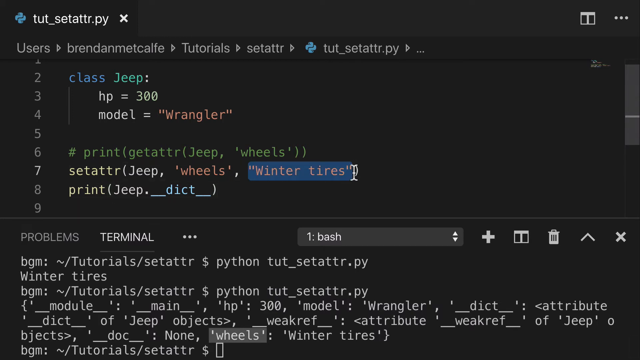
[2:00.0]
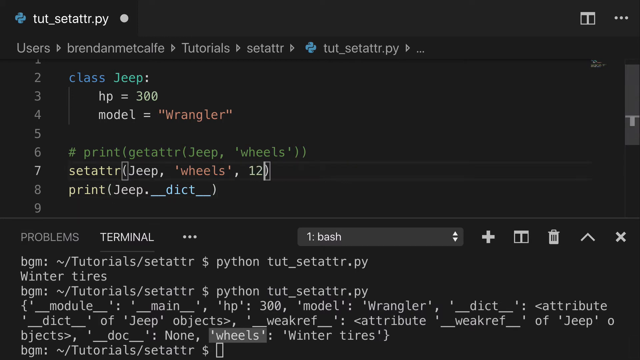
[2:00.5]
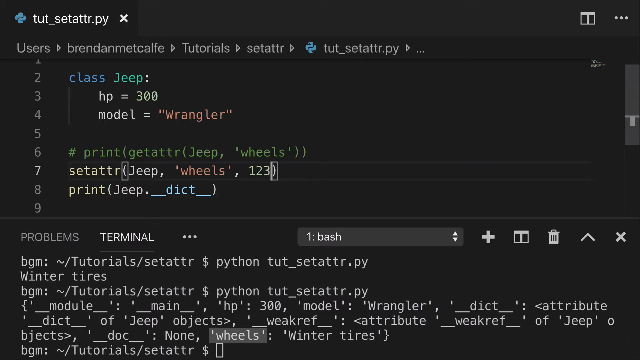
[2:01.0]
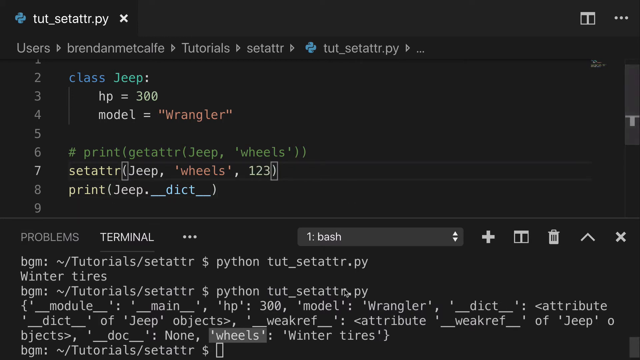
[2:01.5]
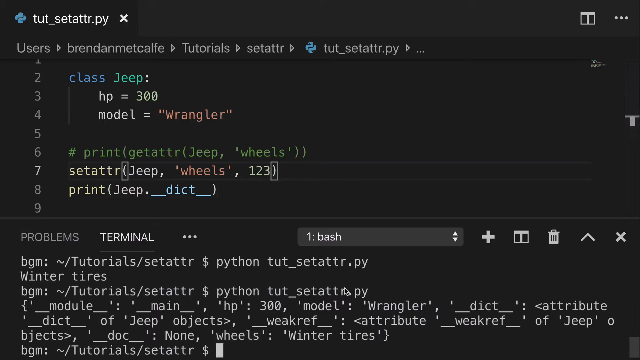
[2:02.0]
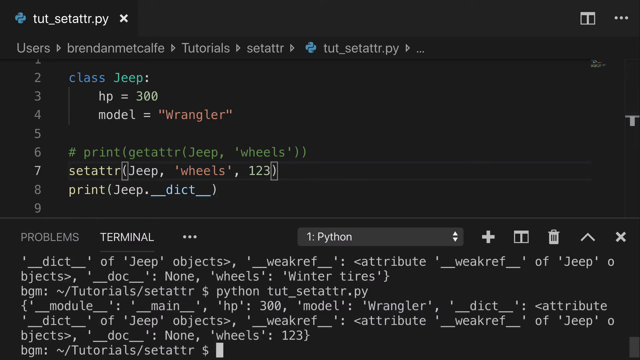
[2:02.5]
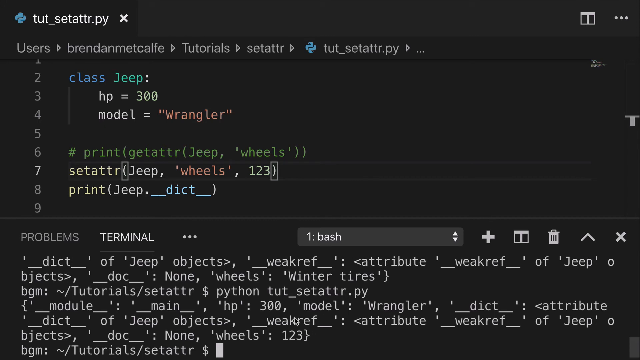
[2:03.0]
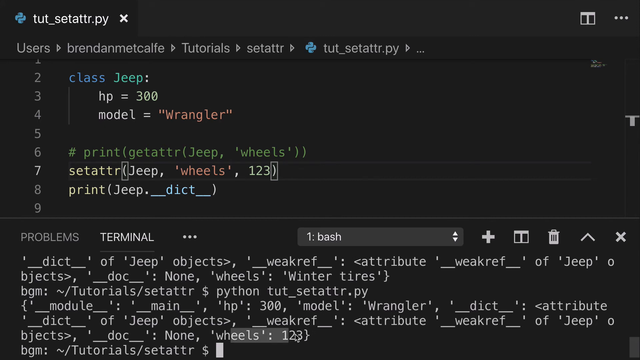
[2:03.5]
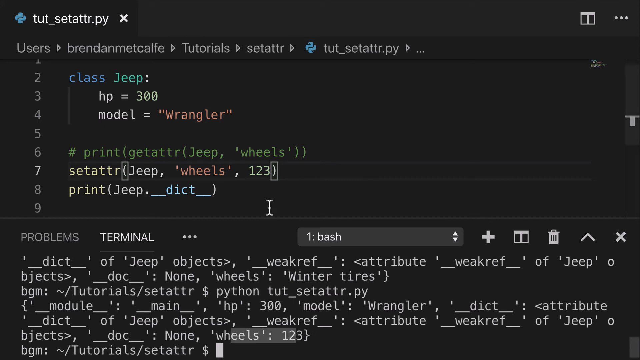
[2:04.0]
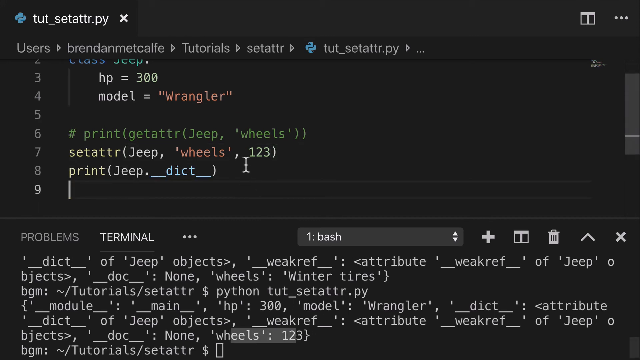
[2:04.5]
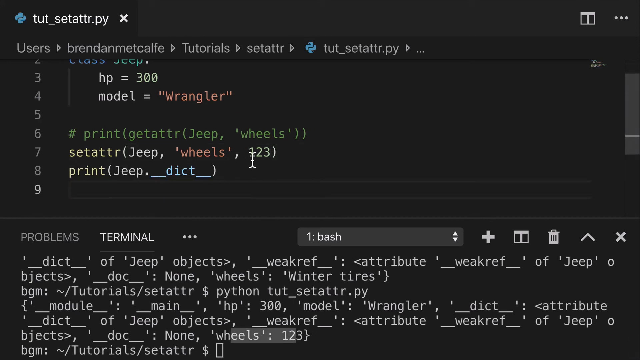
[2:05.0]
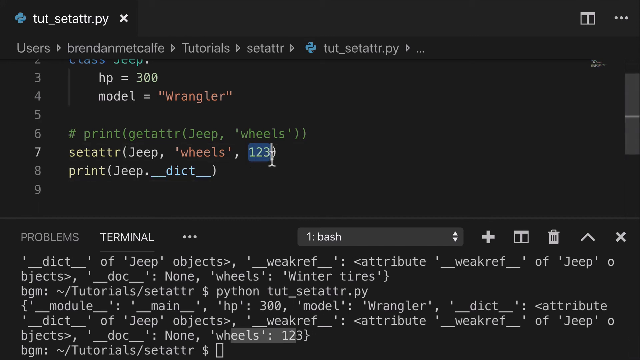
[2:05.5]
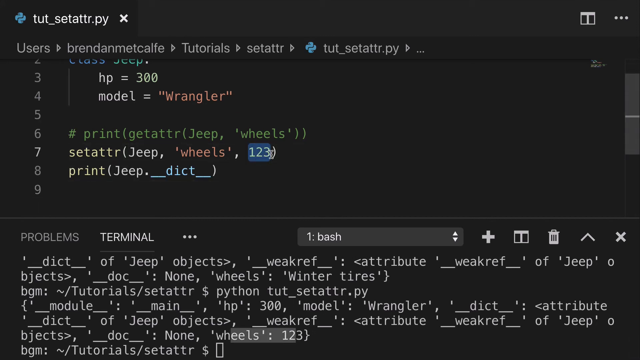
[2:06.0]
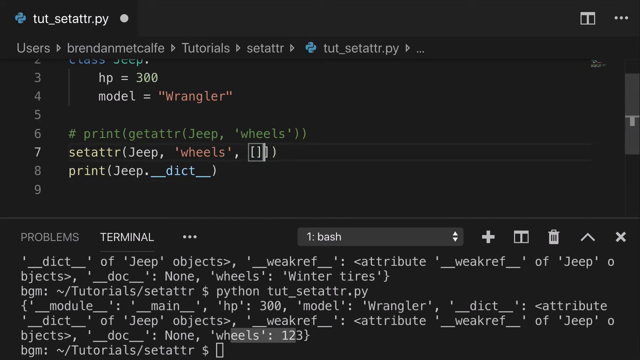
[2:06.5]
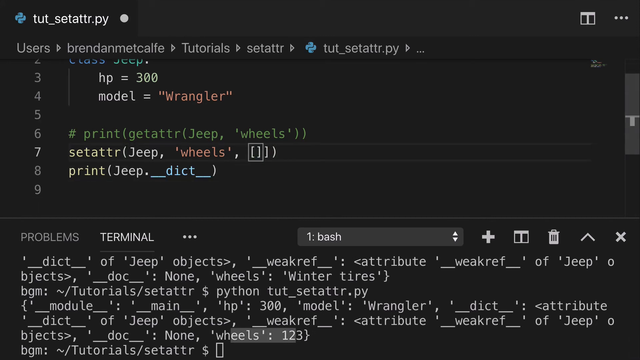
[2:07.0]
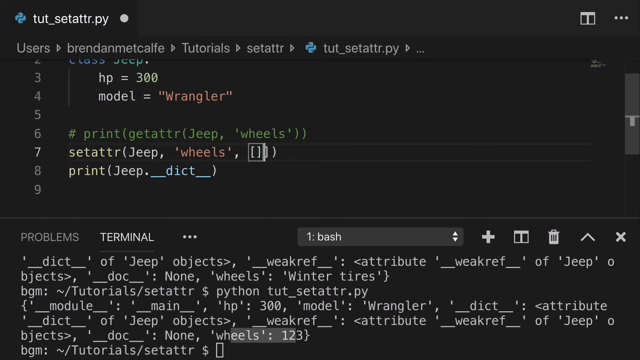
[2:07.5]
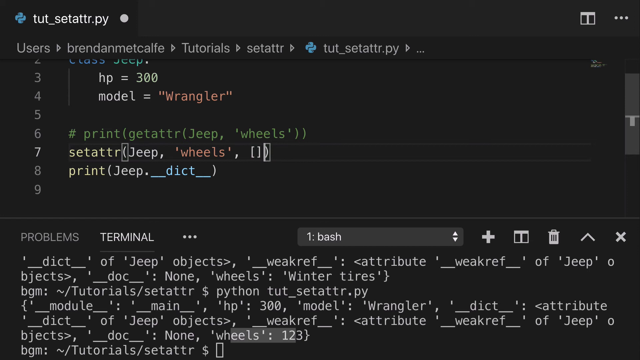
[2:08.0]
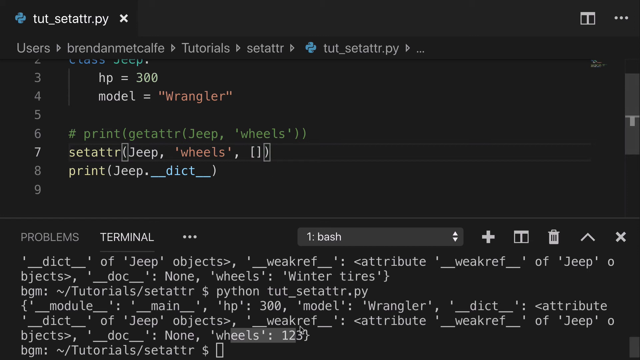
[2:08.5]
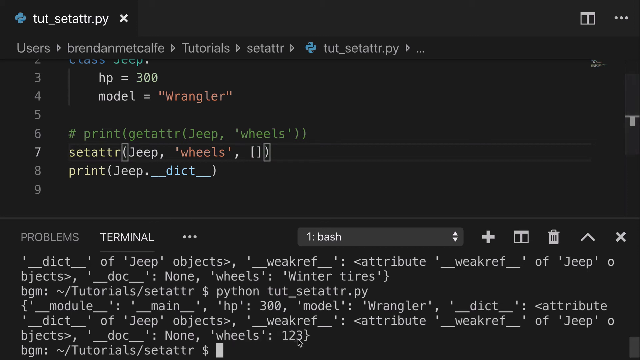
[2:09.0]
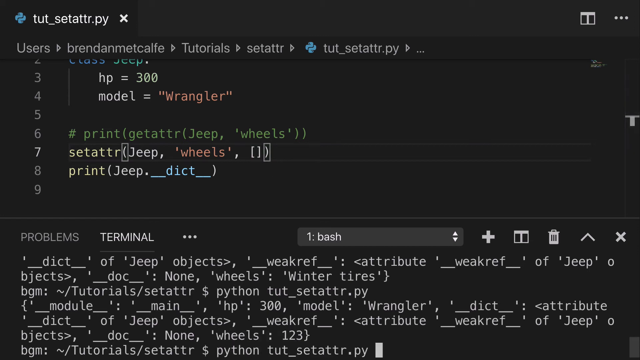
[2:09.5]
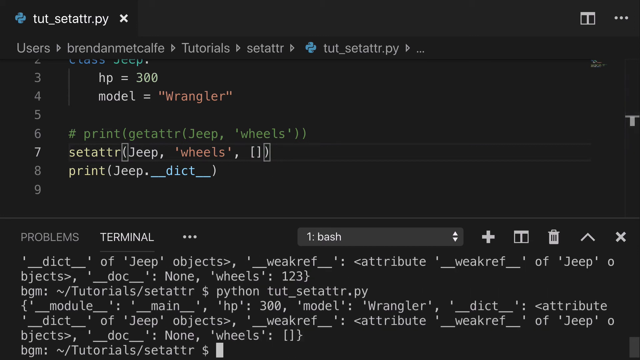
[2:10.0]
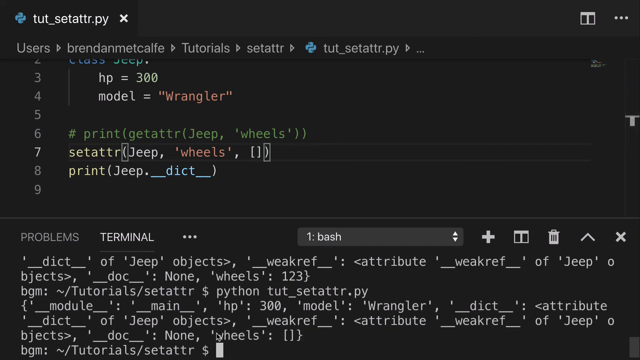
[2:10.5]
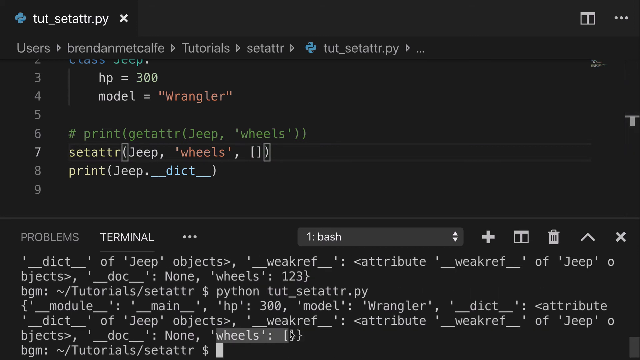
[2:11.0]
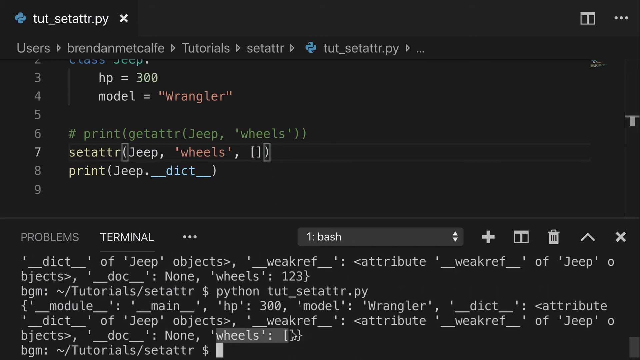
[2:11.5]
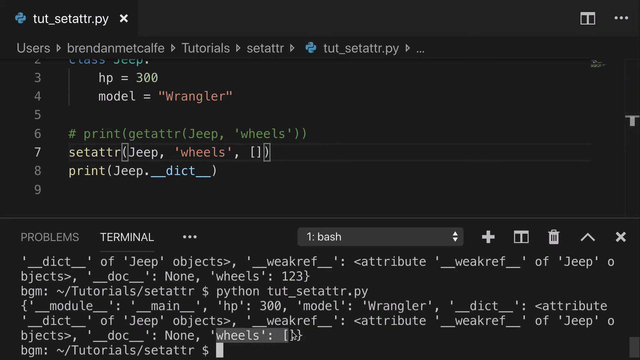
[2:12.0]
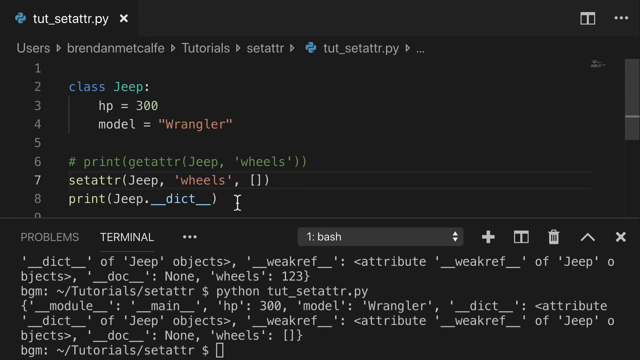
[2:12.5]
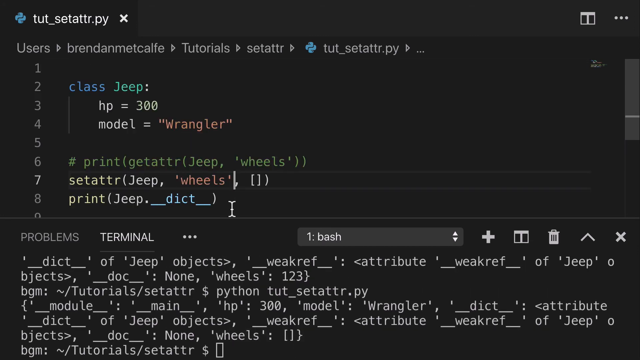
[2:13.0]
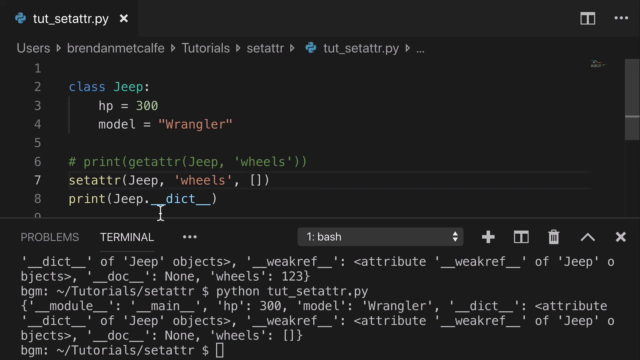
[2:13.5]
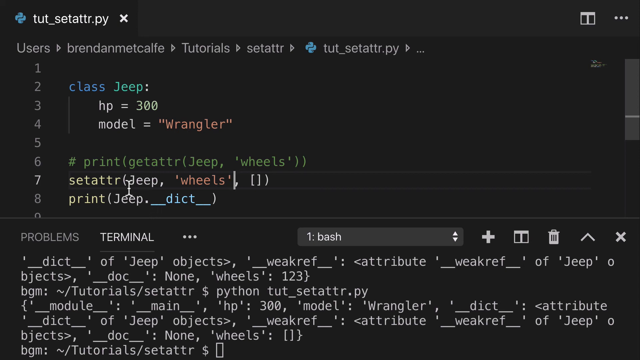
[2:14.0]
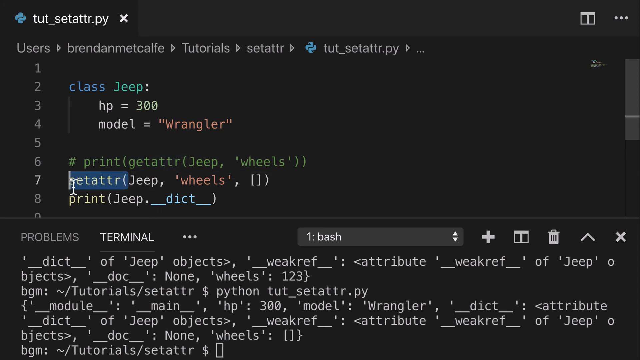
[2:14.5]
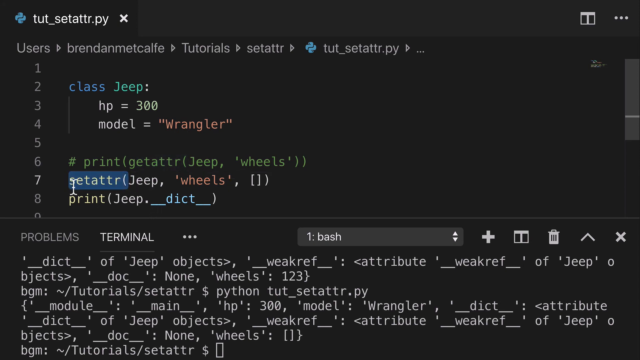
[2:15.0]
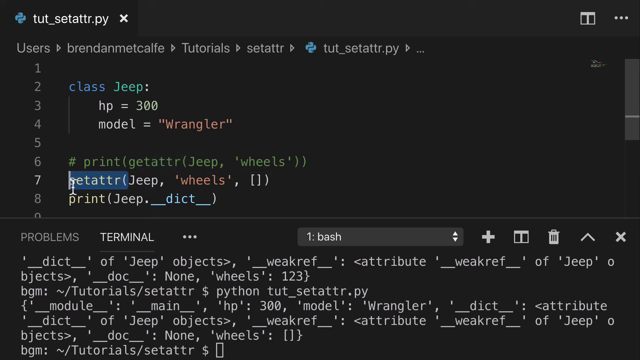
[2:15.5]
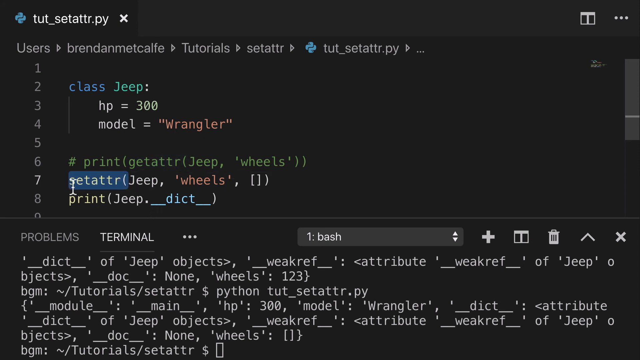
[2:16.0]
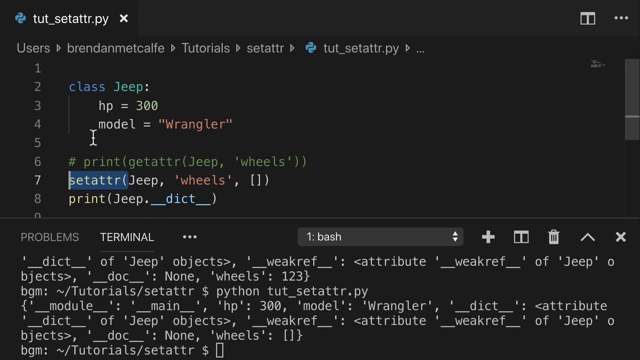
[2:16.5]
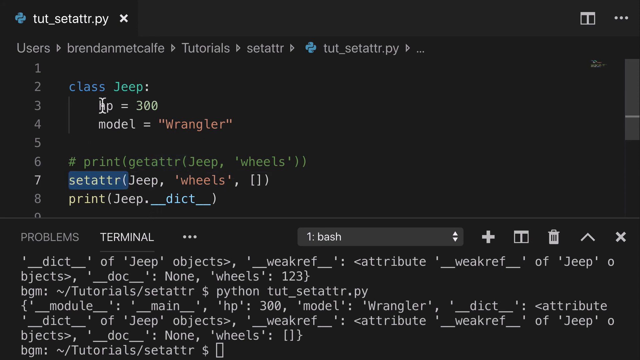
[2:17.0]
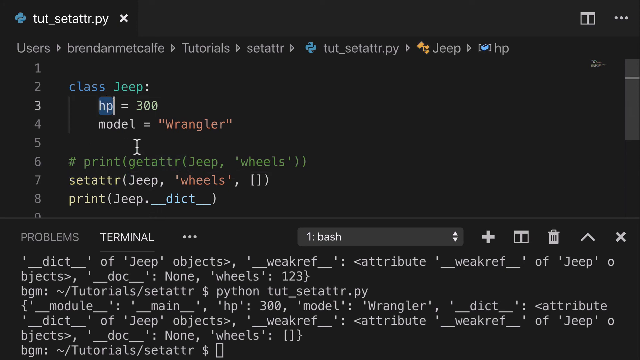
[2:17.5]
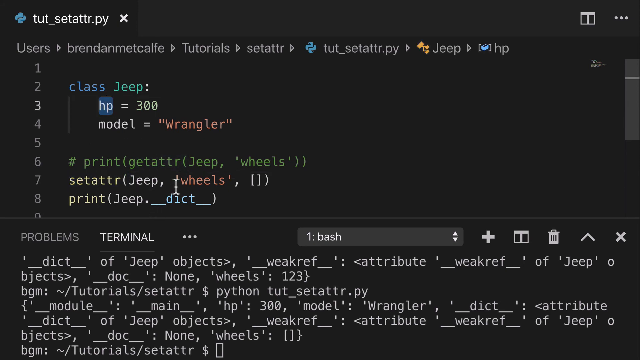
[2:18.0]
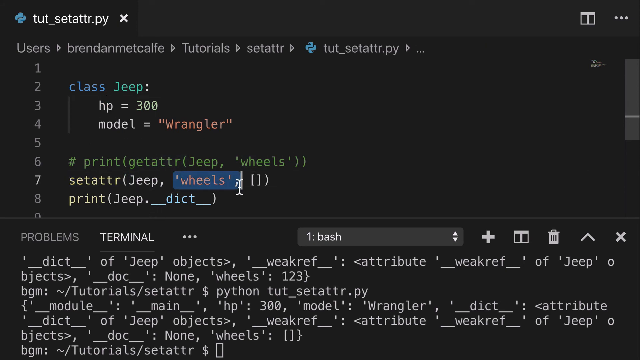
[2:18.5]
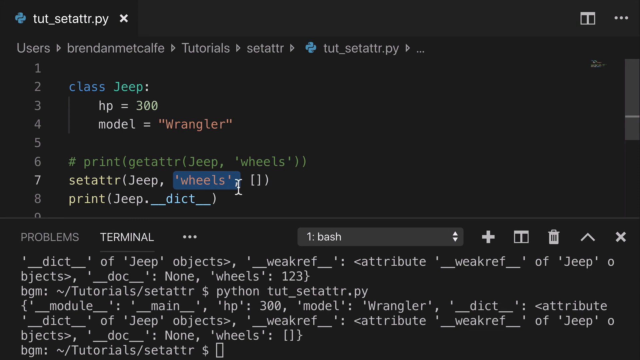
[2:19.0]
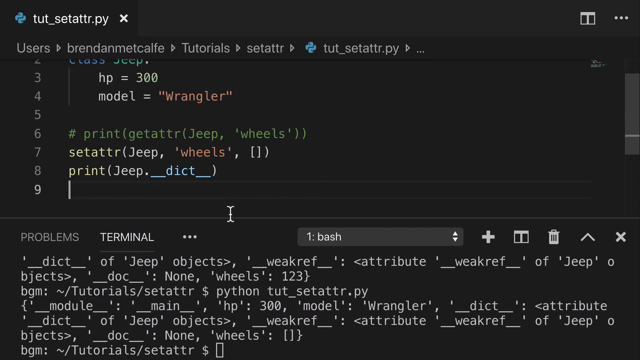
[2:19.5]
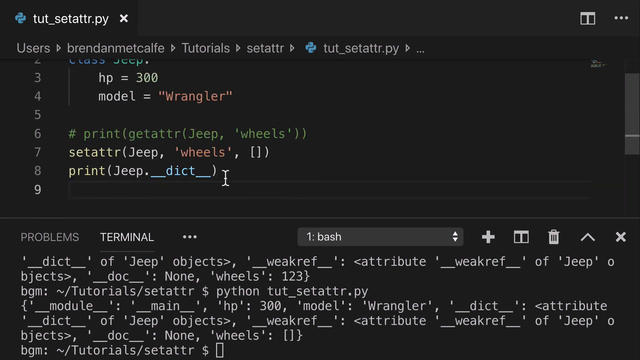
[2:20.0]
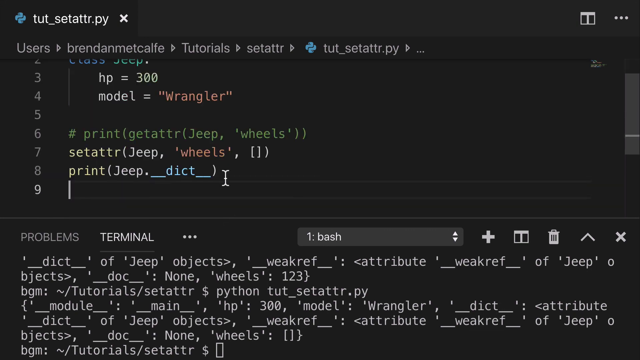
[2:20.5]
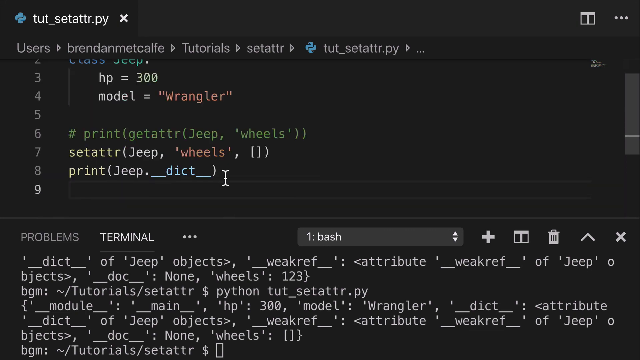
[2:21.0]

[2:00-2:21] The black screen shows different writing, divided into a top half and a bottom half. At the top it reads "user" and "tutorial." Beneath the second line are "problems" and "terminal," three dots, "1 bash," an up and down arrow, a plus sign, a bookmark, a recycling bin, an up arrow and an X. A lot of writing is shown, and changes are made at the top of the page that change things at the bottom. The cursor moves, words are removed and information is typed in, and the information at the bottom of the page changes as well.